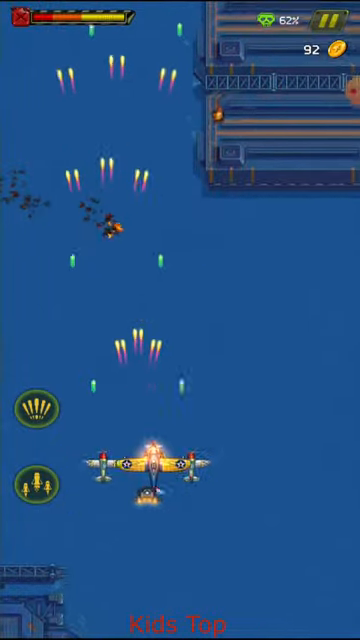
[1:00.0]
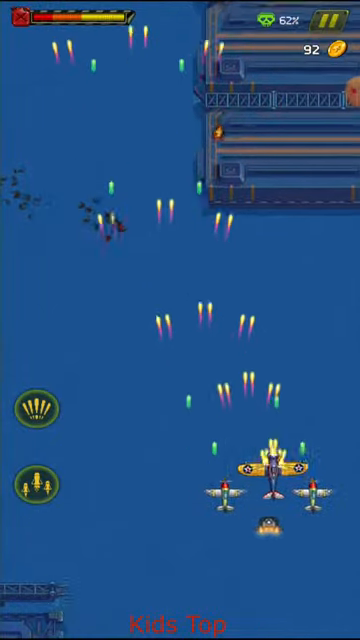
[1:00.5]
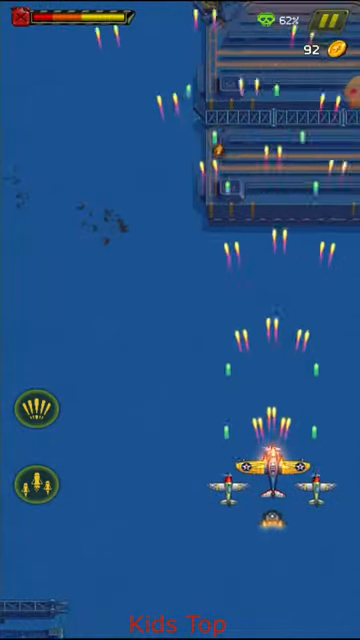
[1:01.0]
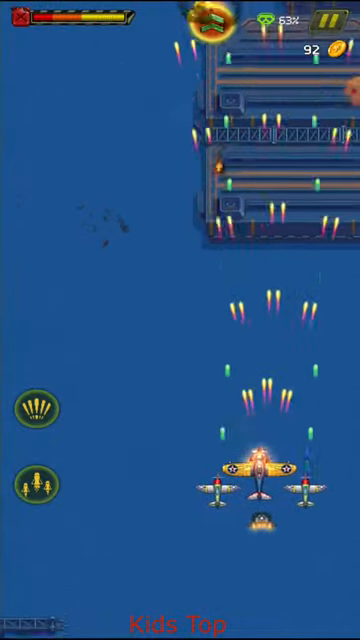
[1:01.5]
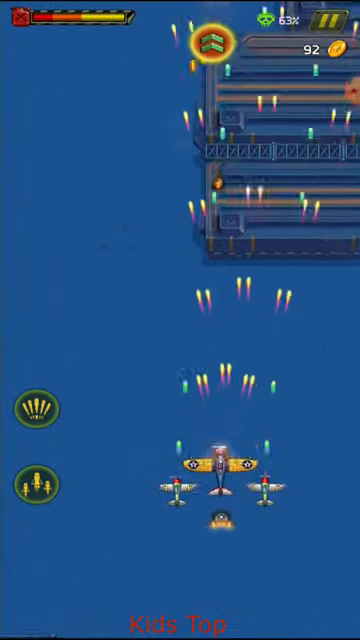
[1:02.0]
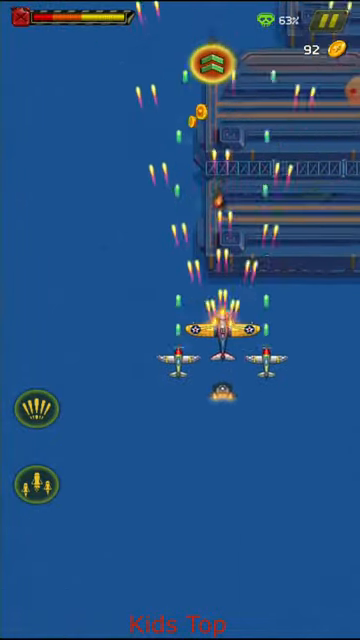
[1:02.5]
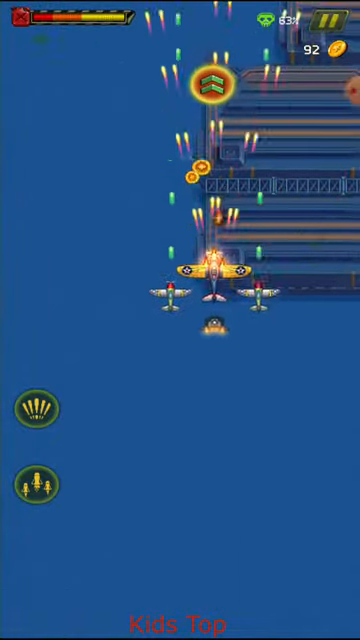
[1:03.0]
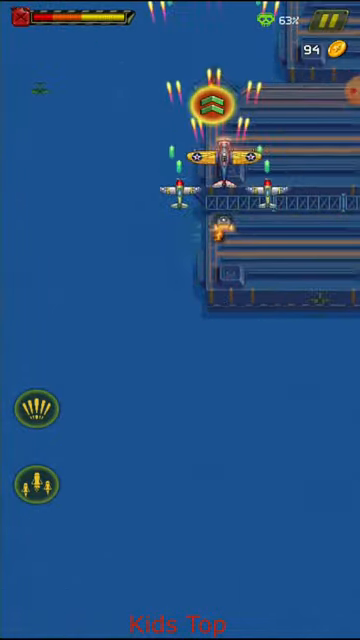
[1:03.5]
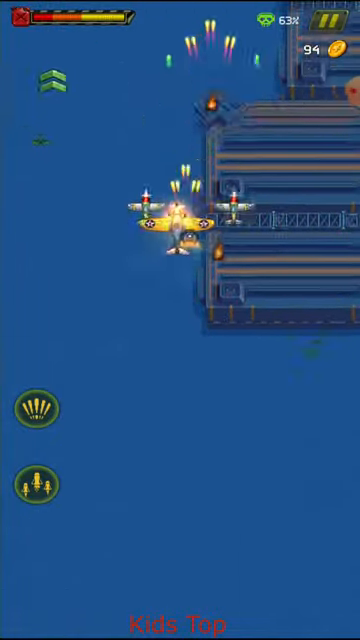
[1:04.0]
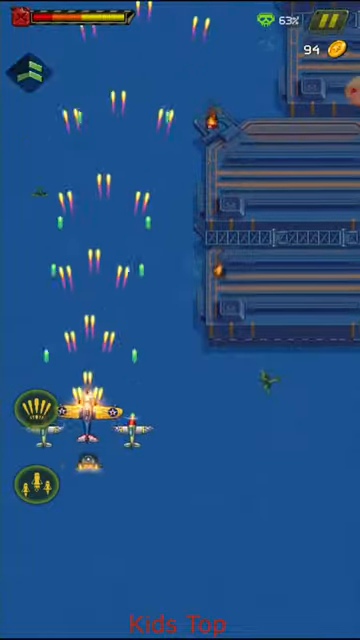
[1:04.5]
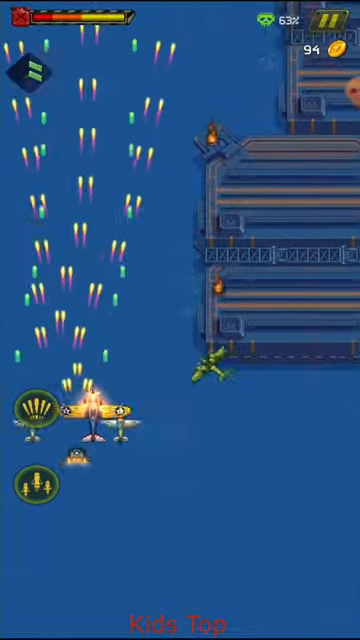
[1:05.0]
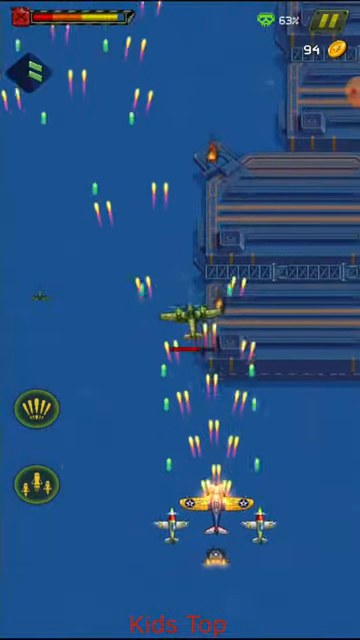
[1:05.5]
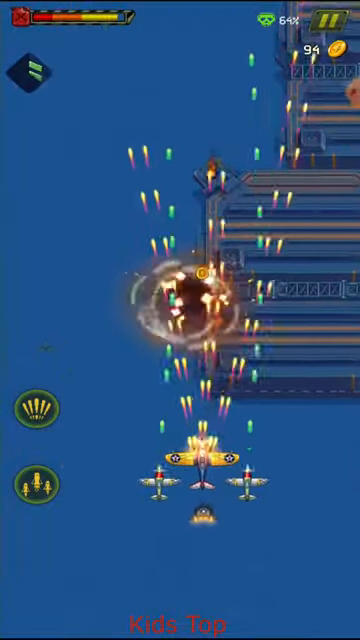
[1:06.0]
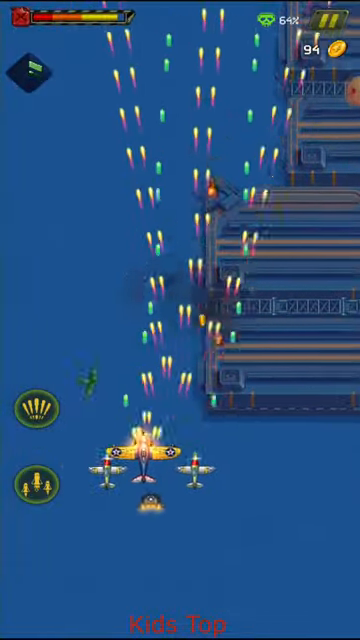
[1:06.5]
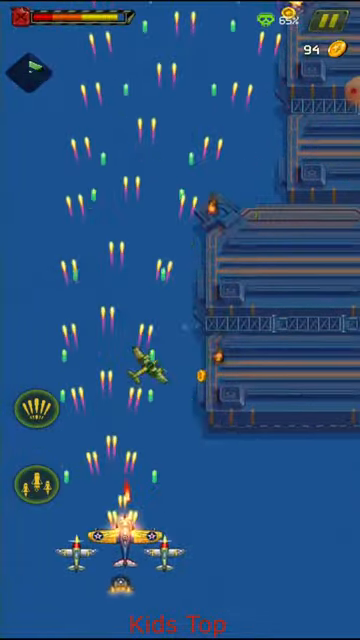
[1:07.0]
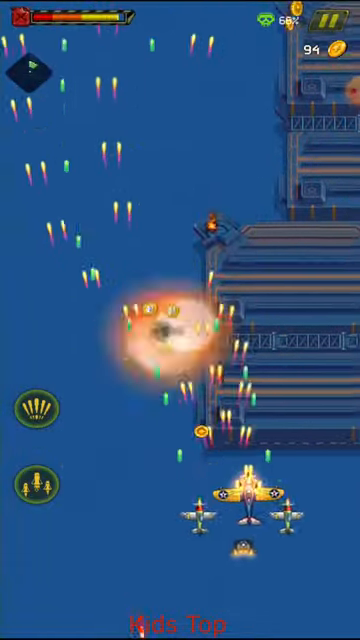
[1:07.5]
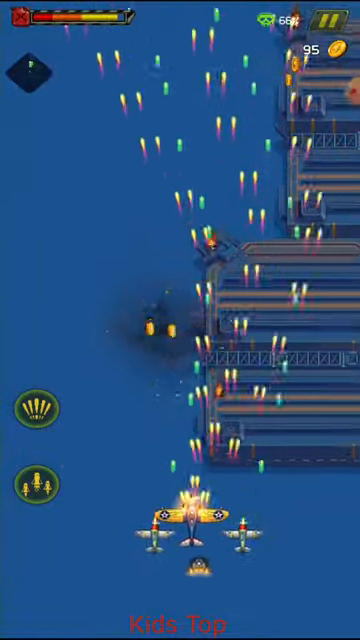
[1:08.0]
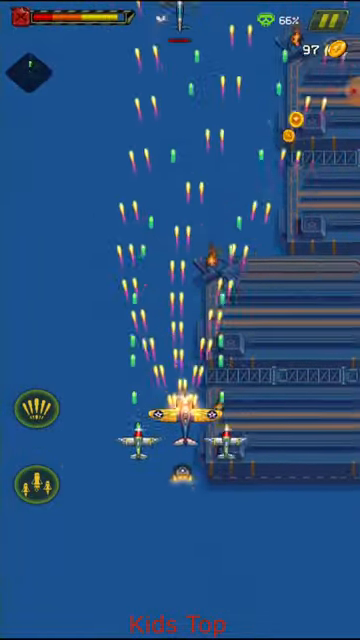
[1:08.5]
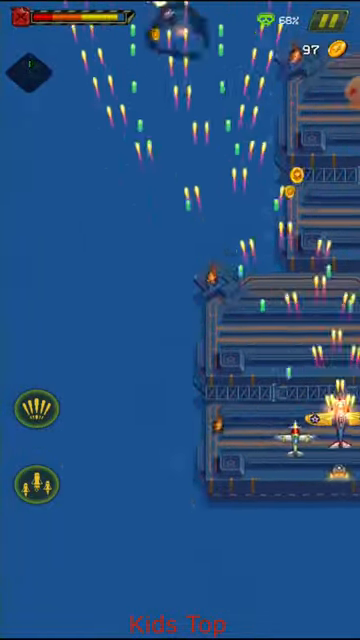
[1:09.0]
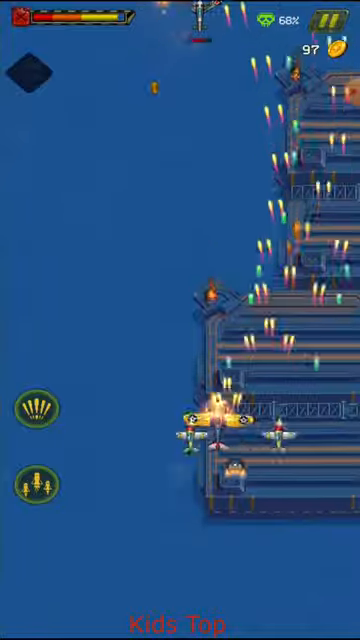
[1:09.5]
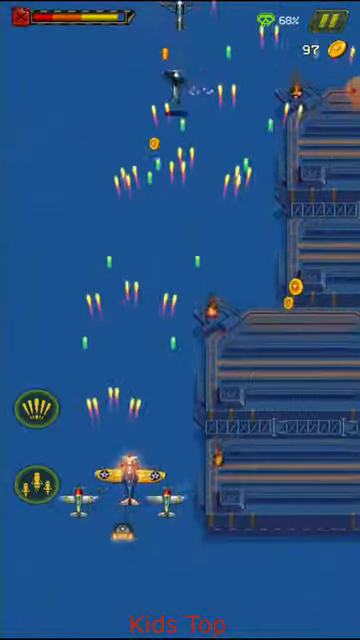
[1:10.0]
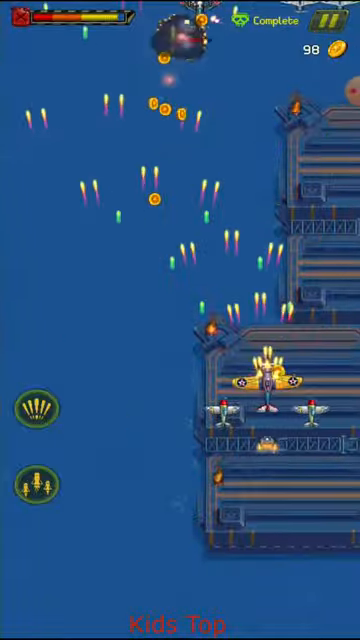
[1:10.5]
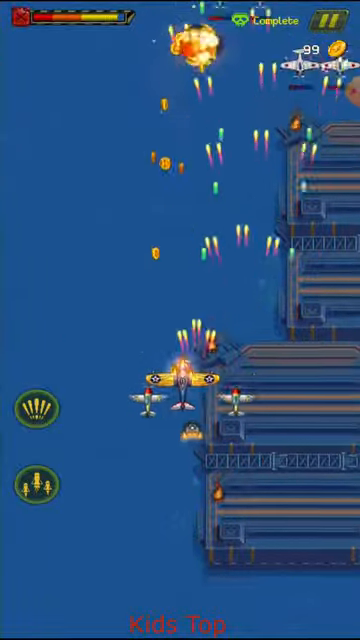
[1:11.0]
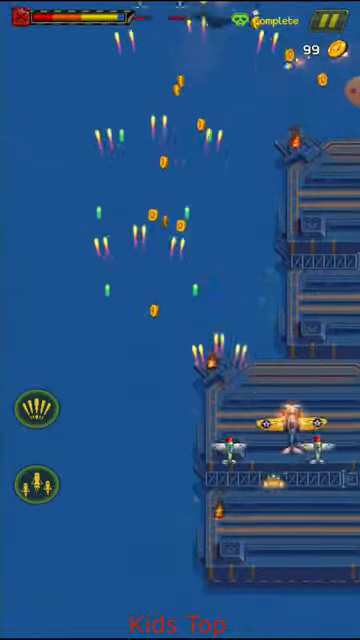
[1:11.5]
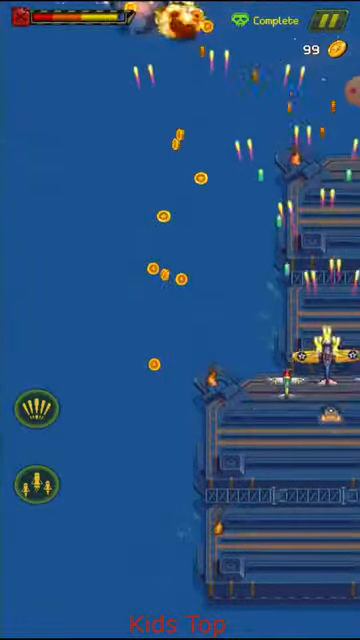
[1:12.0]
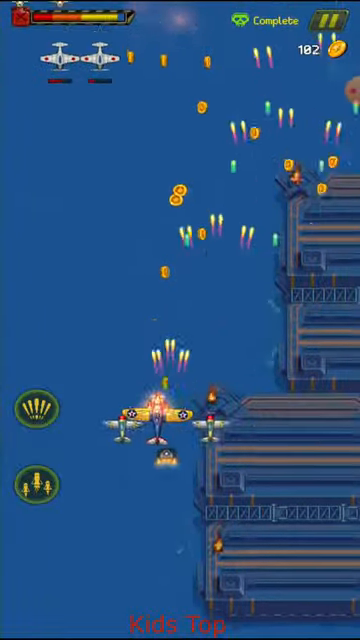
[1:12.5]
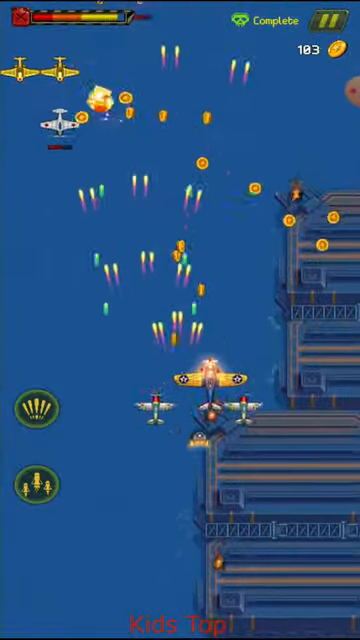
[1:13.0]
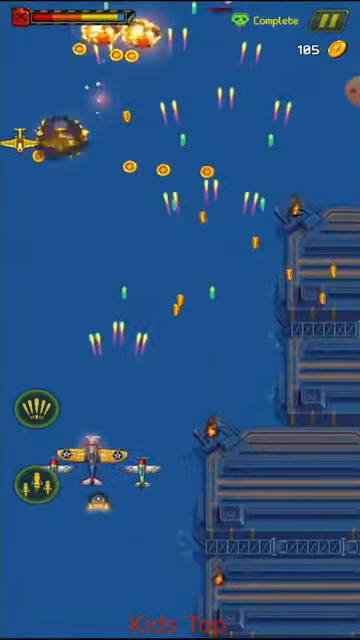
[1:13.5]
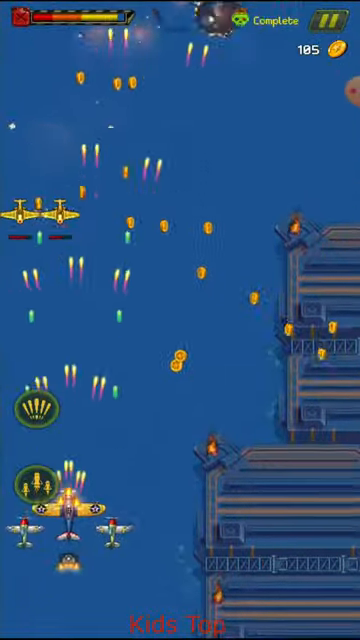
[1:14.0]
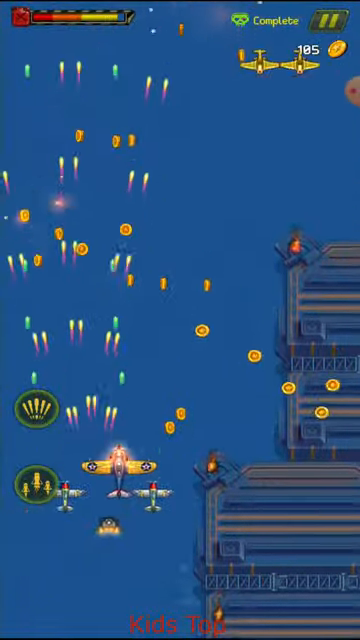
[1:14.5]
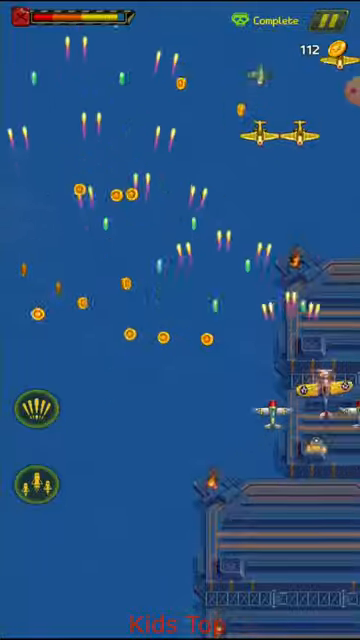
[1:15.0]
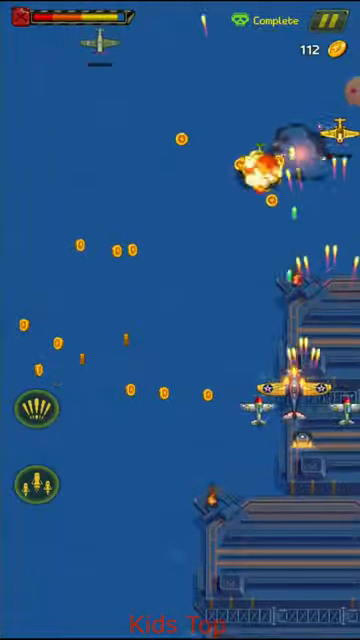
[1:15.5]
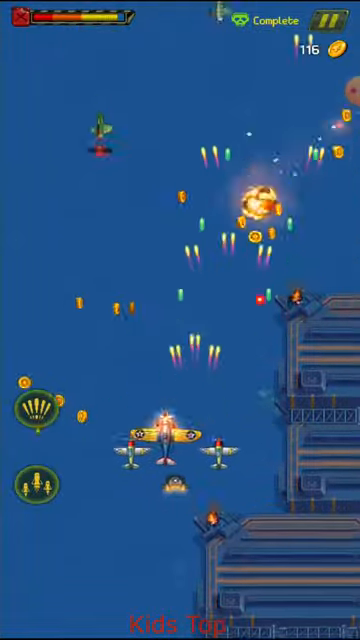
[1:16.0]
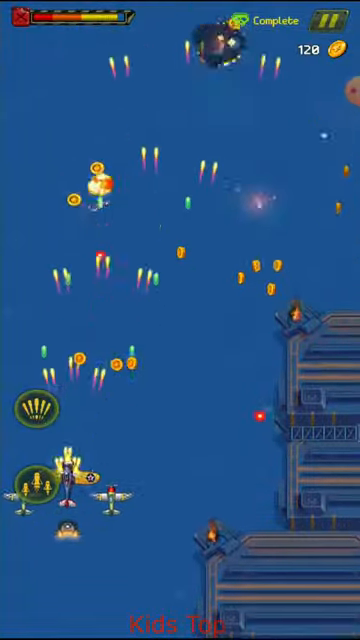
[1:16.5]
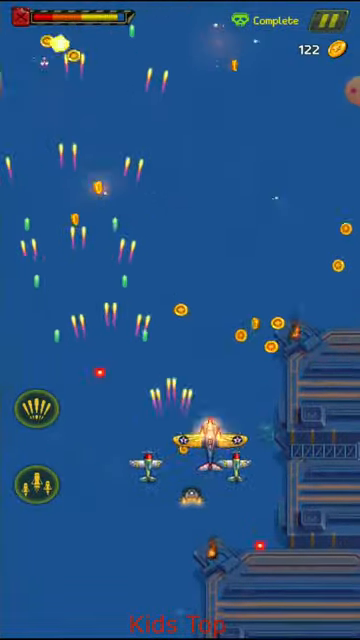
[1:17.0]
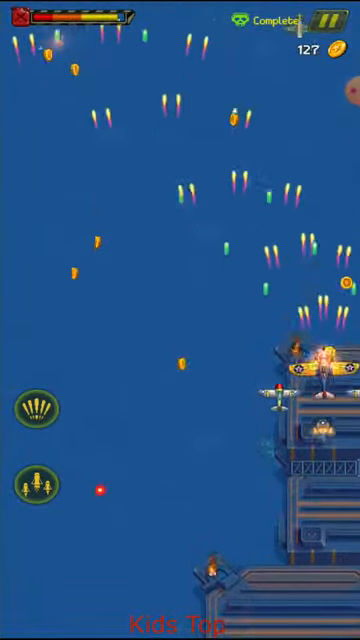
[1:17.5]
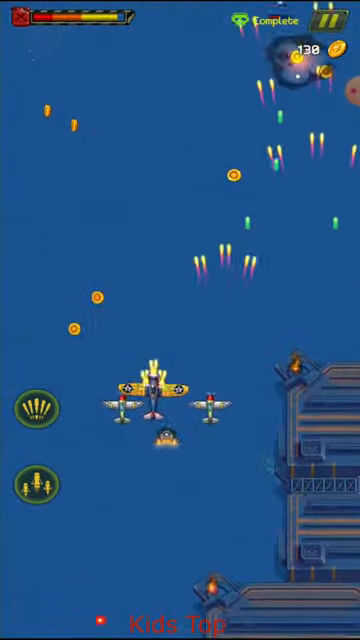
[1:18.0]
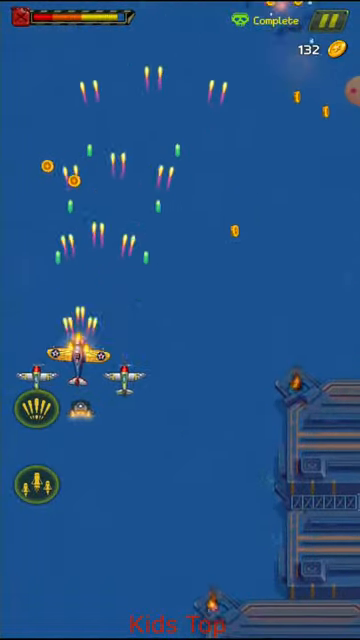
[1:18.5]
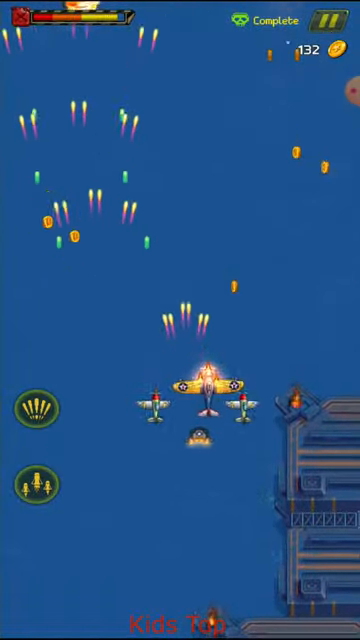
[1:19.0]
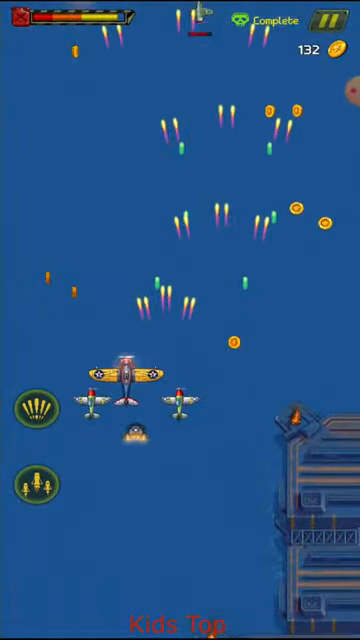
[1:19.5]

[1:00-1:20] In the bullet-time jet game, the player controls a military fighter jet with two other jets to its left and right and some kind of object behind them that apparently gives them some sort of boost. Lightning bolts and fireballs shoot across the screen, and lots of enemy fighter jets and helicopters appear for the player to destroy. The player moves back and forth, shooting lots of bullets all the time, dodging incoming enemy fire and collecting gold coins. A health bar is in the top left corner, and a stats bar in the top right corner shows how many coins the player has collected; some symbols are still on the screen as well. As planes keep coming, the player keeps shooting them, and when the planes are destroyed gold coins appear, which the player goes over to collect, repeating this as they move forward. The game keeps scrolling up without stopping, so the player has to keep moving forward.